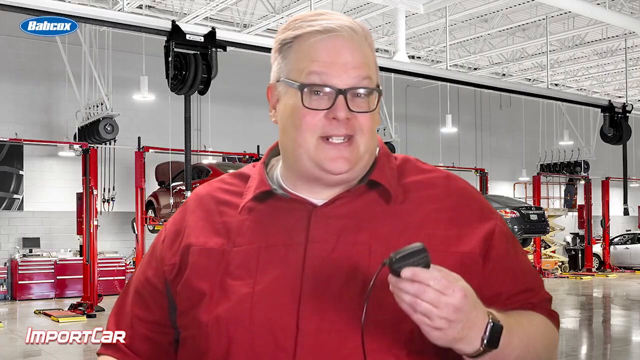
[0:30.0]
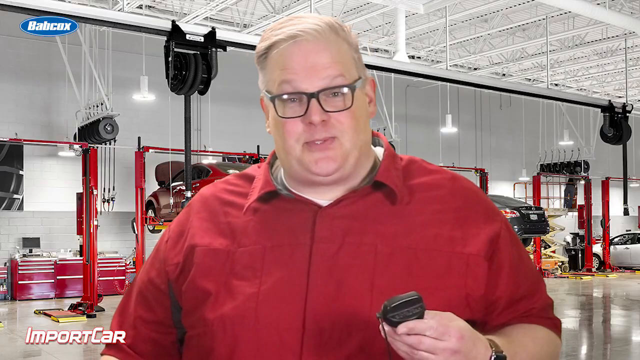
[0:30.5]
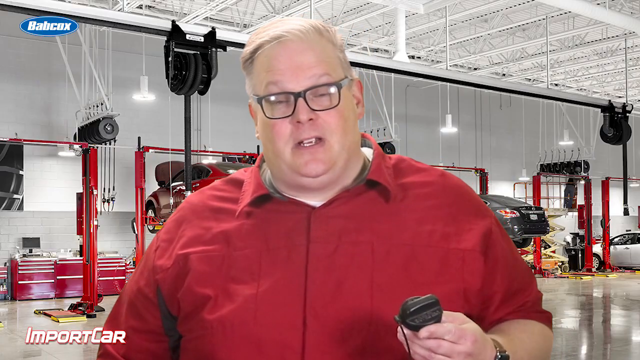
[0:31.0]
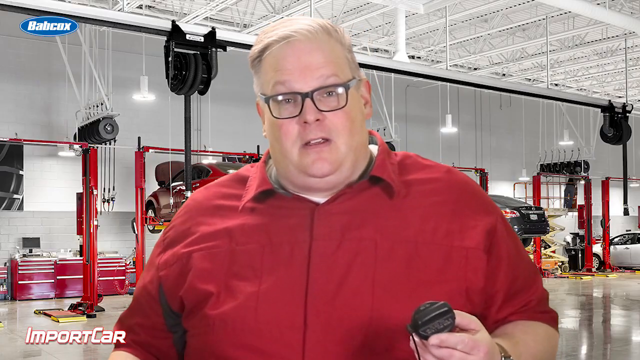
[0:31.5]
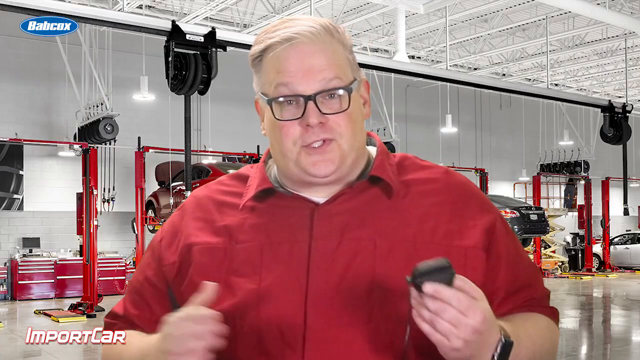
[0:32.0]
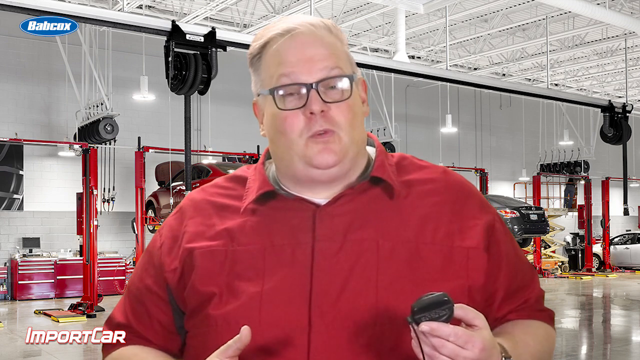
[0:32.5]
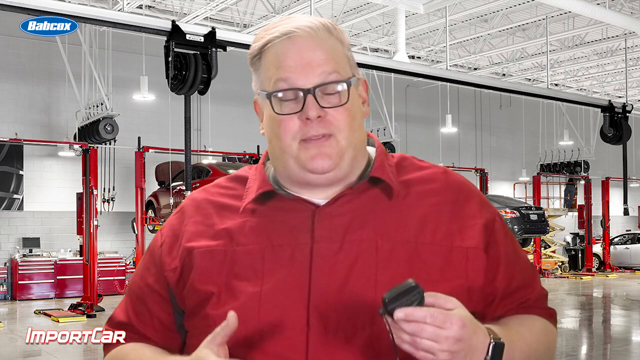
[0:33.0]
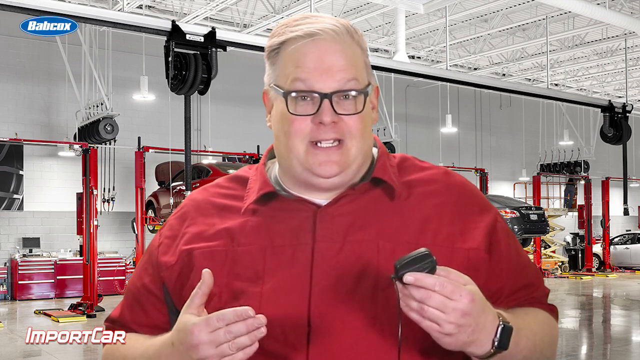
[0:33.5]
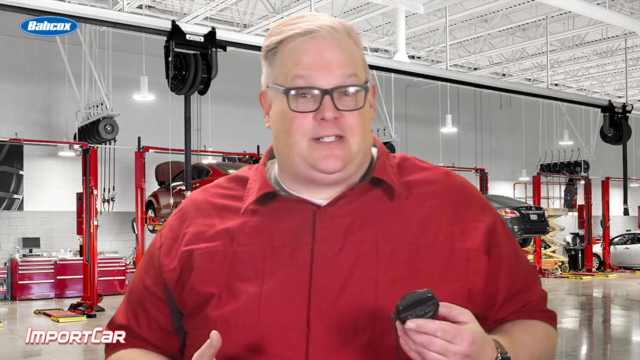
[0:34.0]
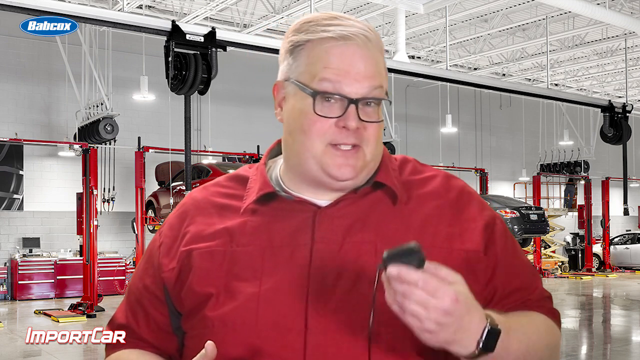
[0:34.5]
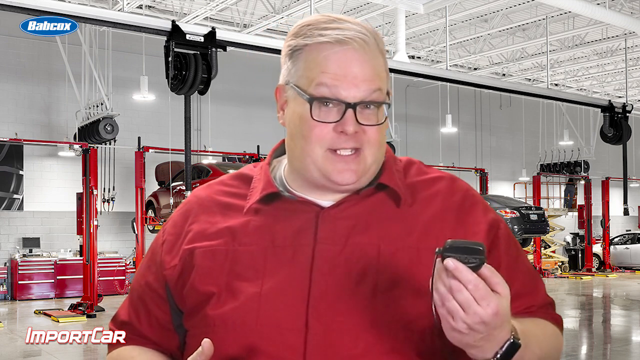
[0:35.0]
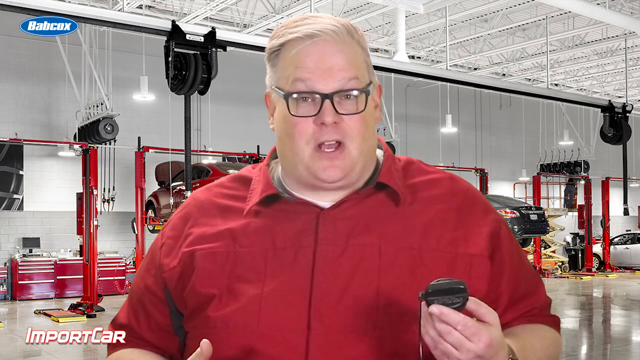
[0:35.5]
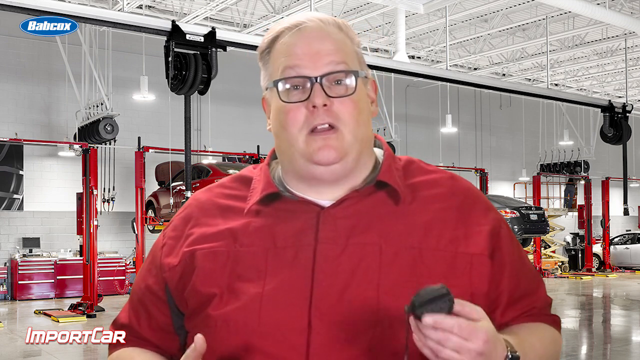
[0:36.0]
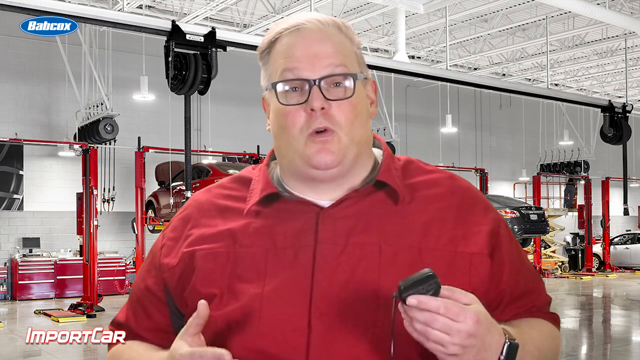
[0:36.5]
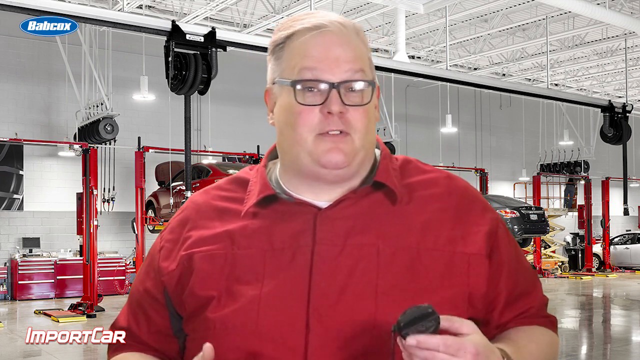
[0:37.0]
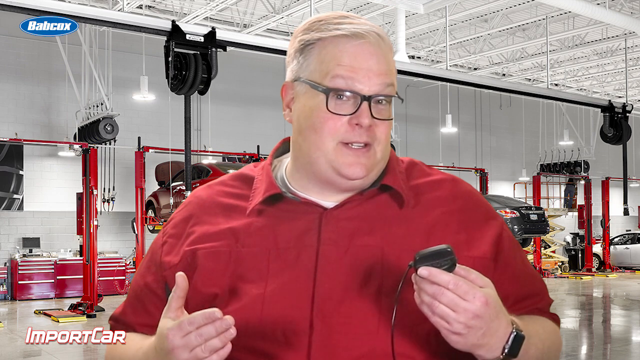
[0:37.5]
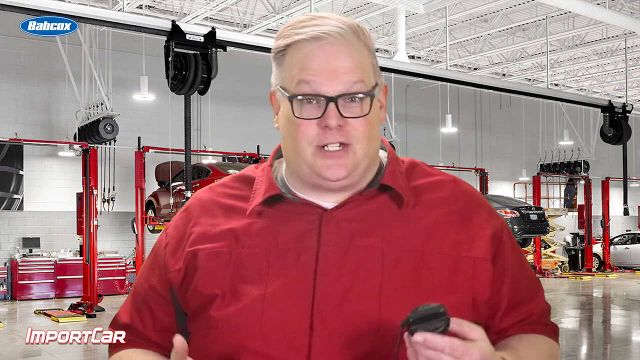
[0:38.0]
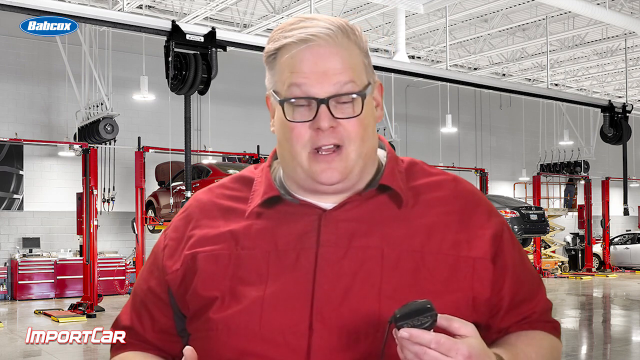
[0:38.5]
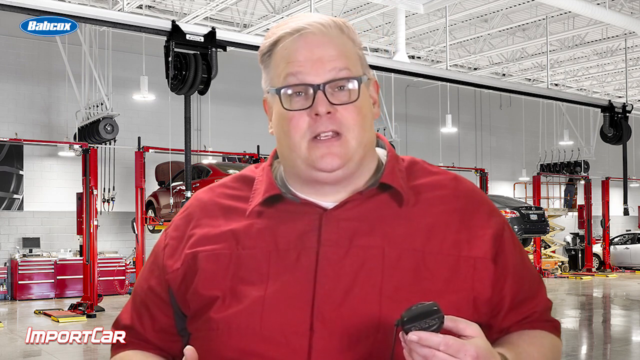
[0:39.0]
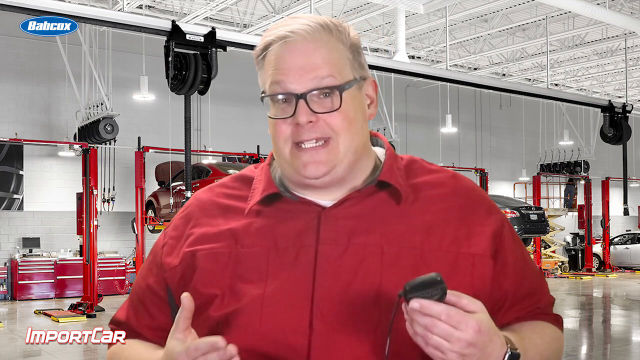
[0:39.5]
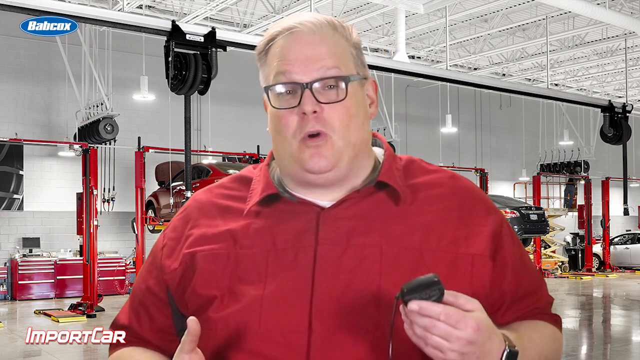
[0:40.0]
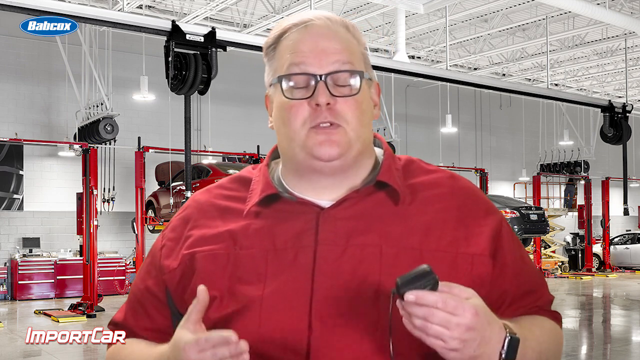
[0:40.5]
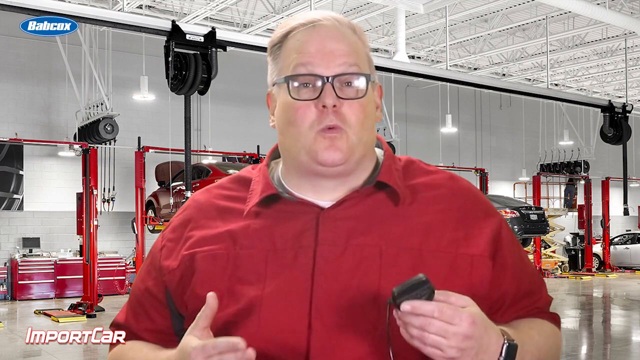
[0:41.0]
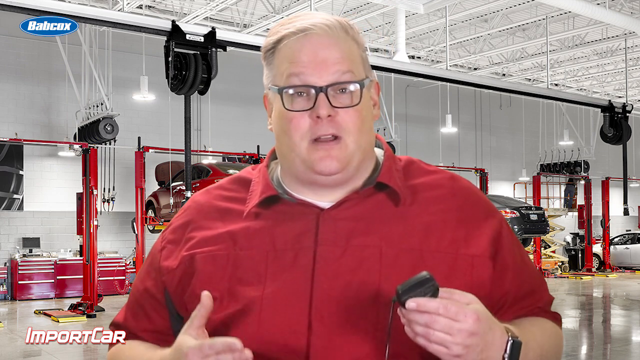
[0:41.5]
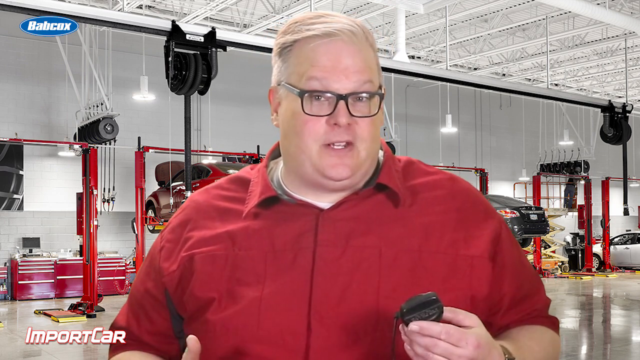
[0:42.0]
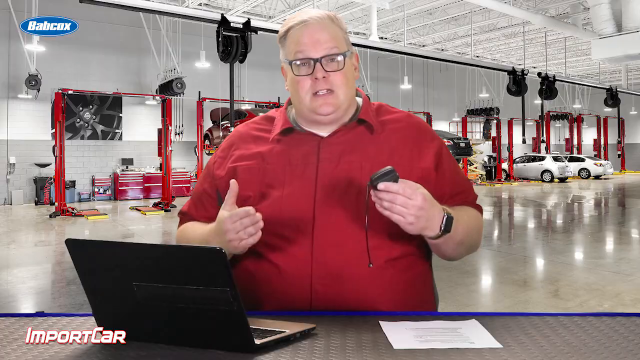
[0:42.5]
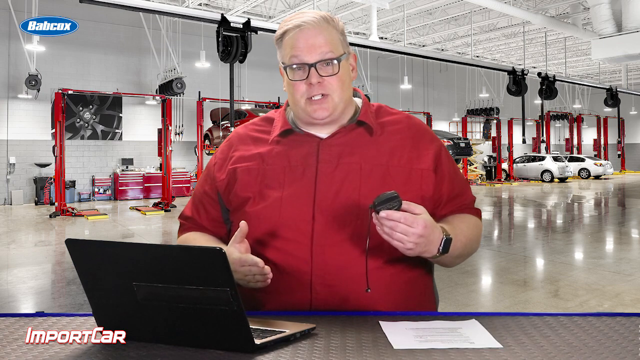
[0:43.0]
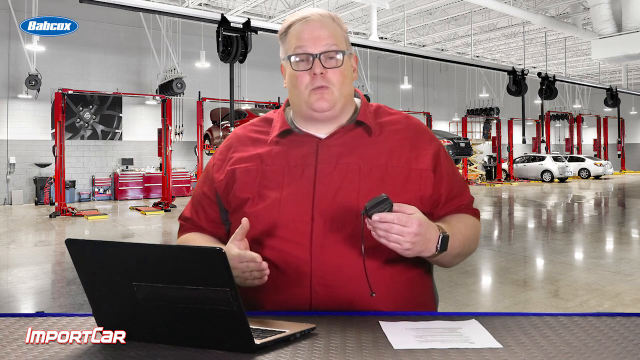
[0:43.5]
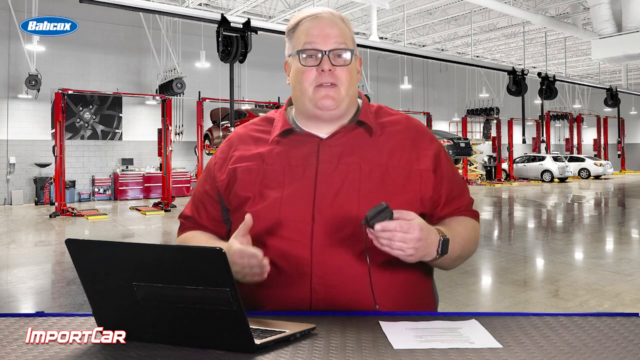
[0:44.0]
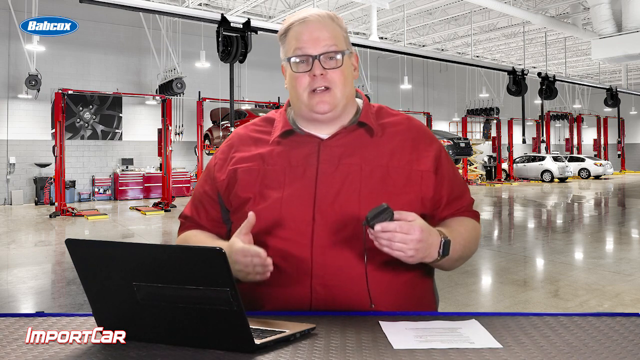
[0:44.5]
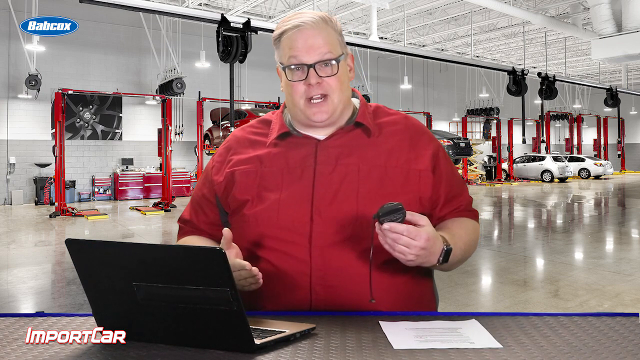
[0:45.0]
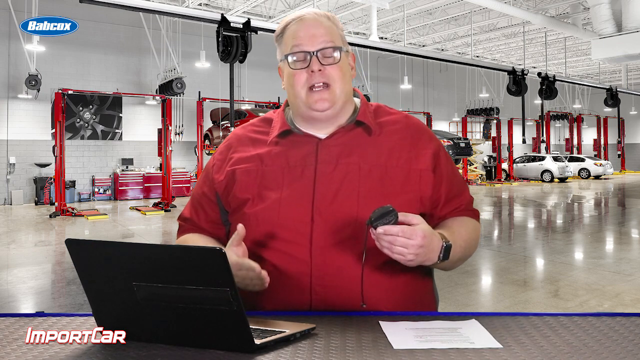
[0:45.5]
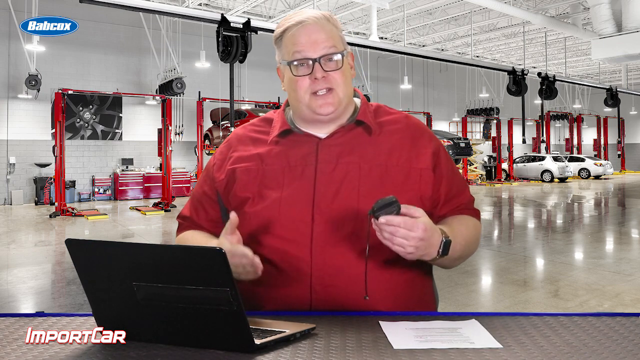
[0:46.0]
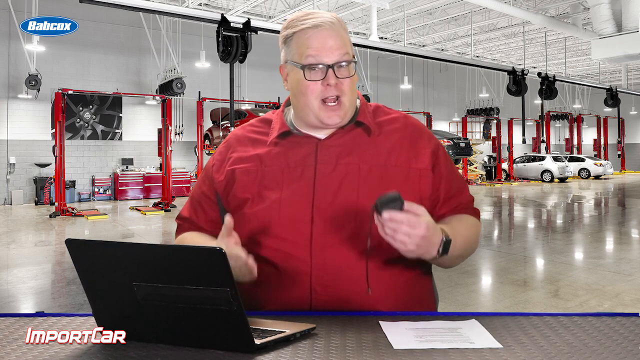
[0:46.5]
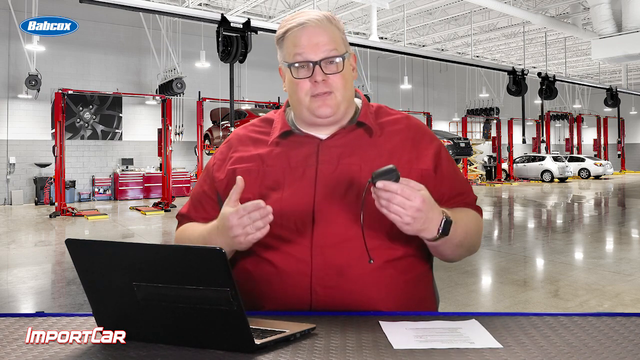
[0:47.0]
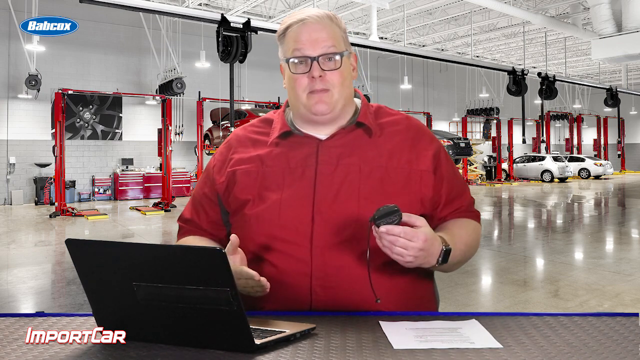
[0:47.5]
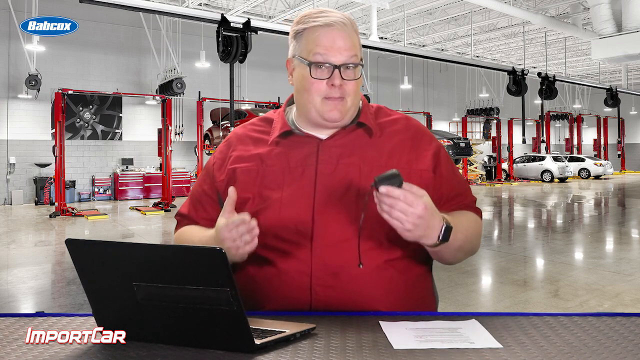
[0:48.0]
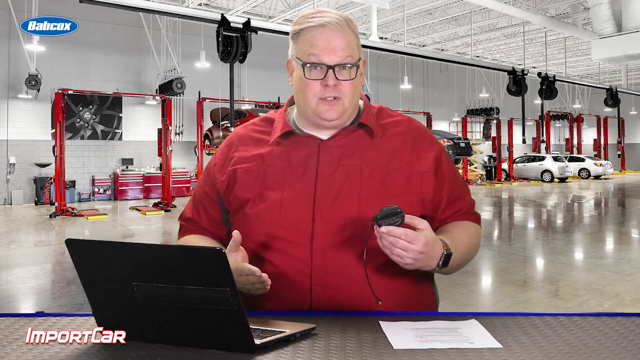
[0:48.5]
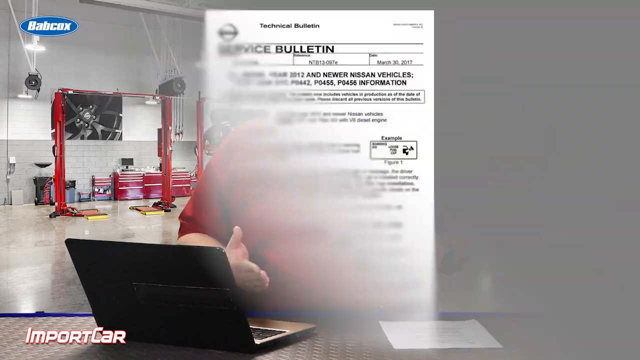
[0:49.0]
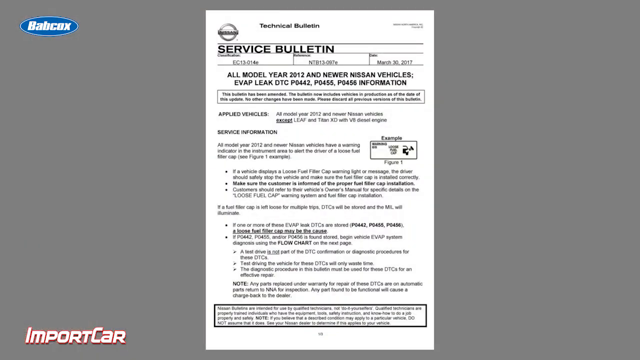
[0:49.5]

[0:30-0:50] The very large white man with short blonde hair, wearing a red shirt with a t-shirt underneath, stands in the modern service garage of a Nissan dealership. He holds a gas cap in his left hand as he talks.